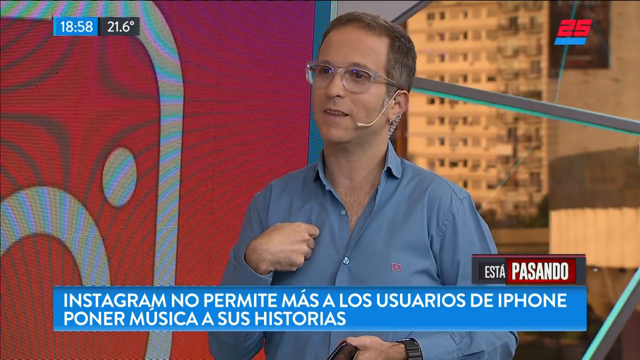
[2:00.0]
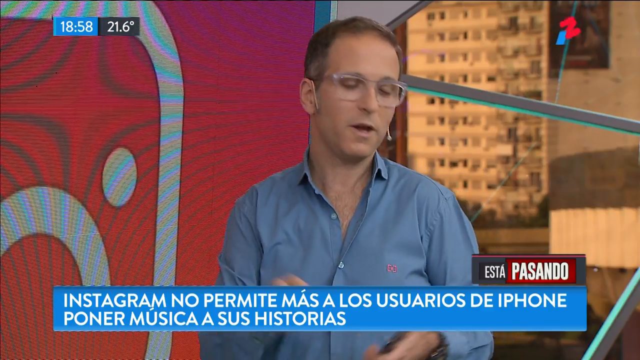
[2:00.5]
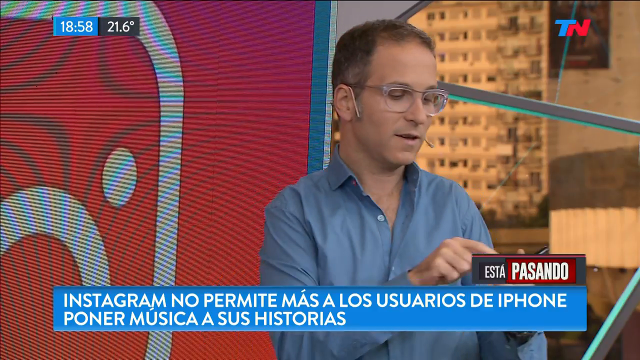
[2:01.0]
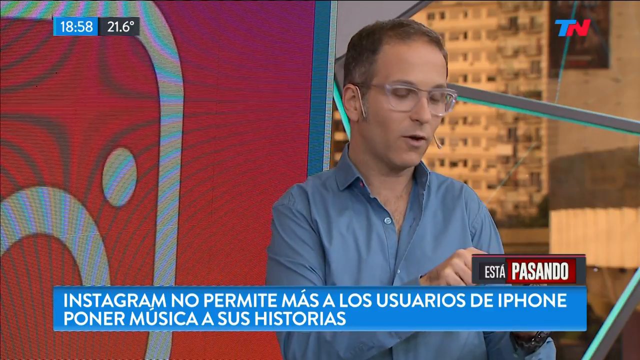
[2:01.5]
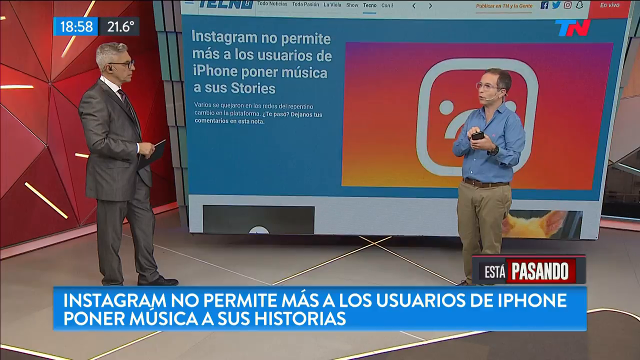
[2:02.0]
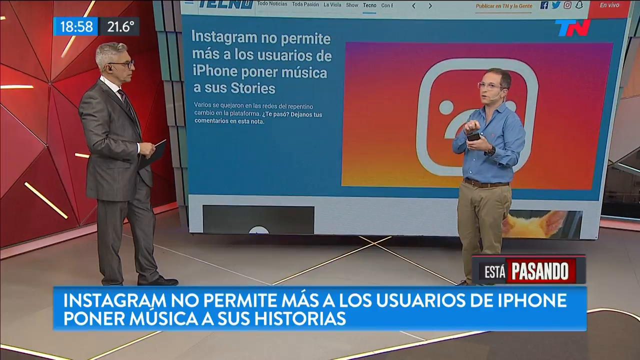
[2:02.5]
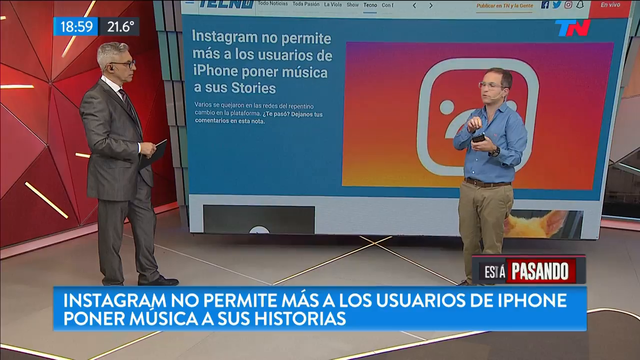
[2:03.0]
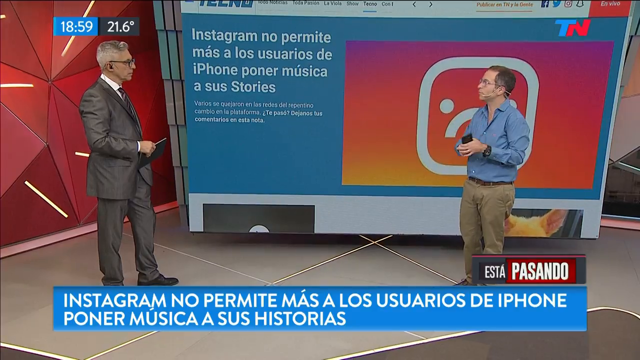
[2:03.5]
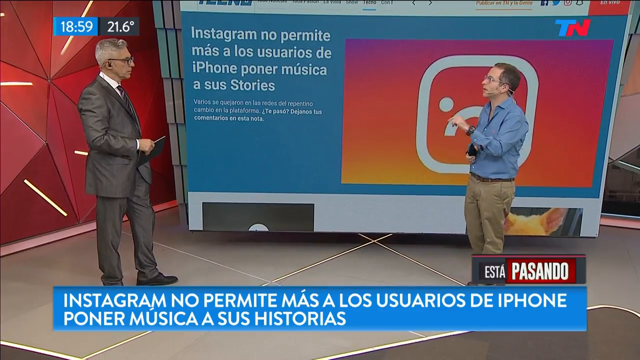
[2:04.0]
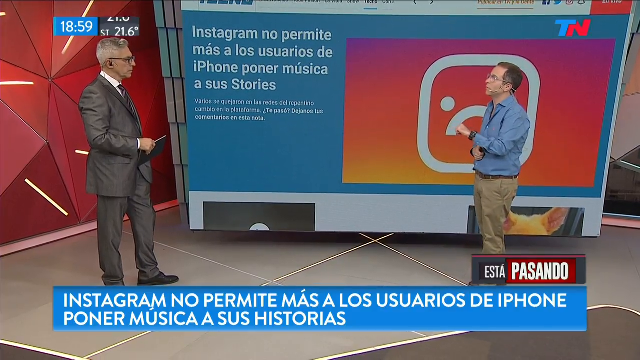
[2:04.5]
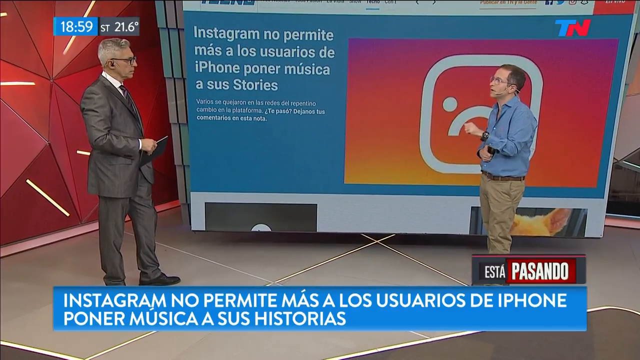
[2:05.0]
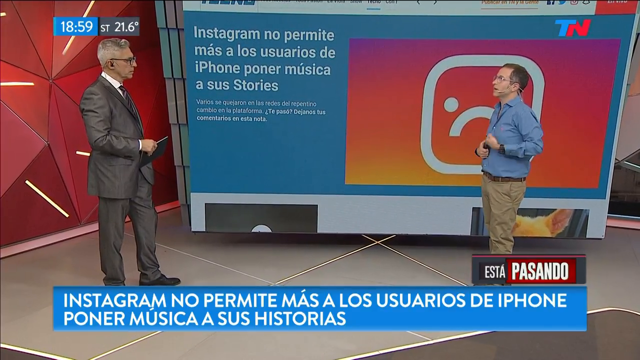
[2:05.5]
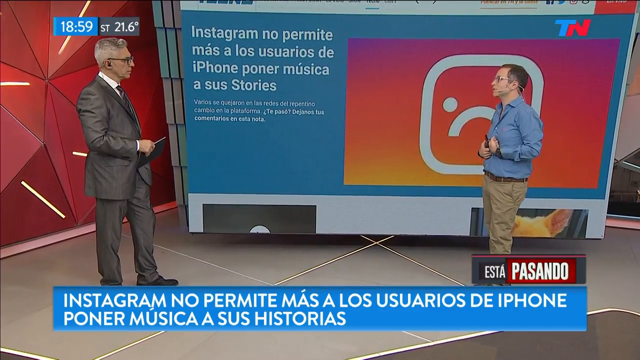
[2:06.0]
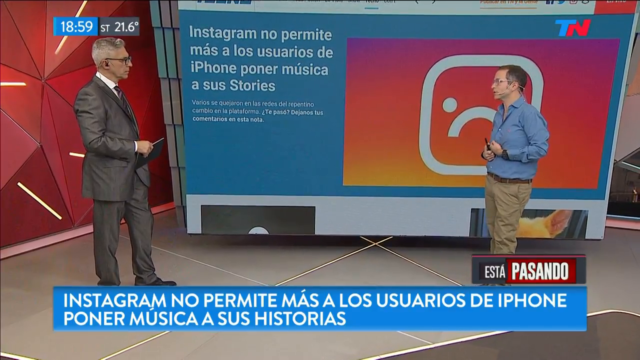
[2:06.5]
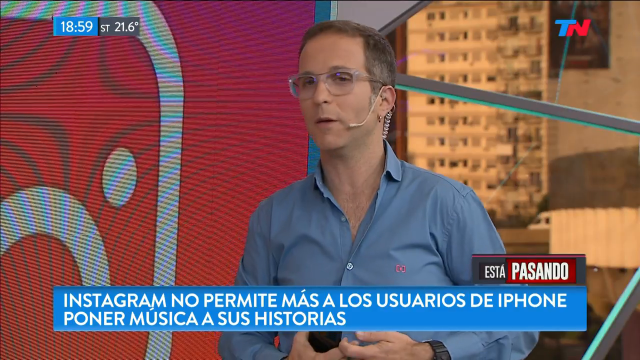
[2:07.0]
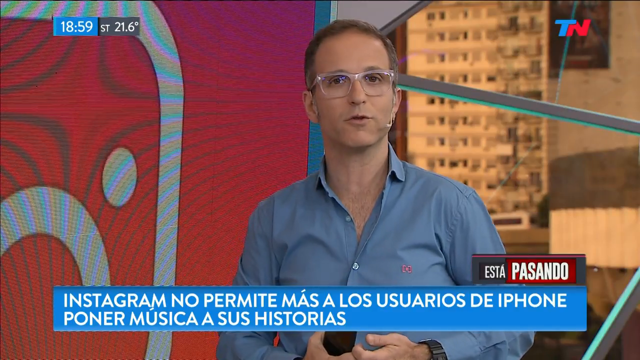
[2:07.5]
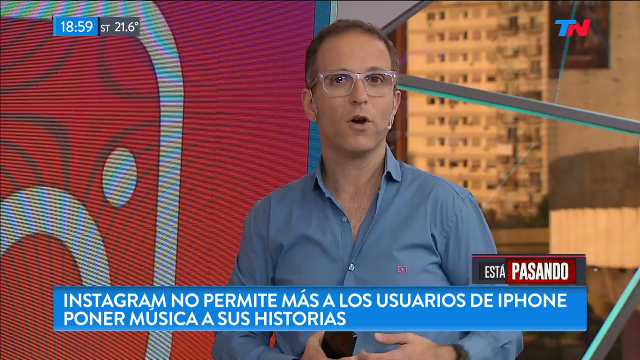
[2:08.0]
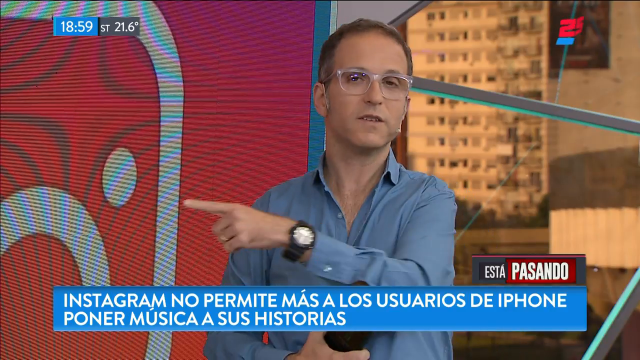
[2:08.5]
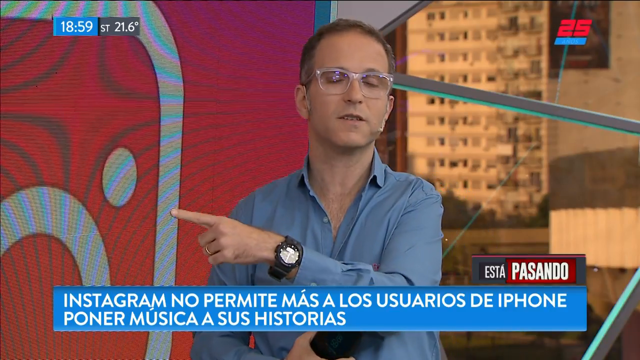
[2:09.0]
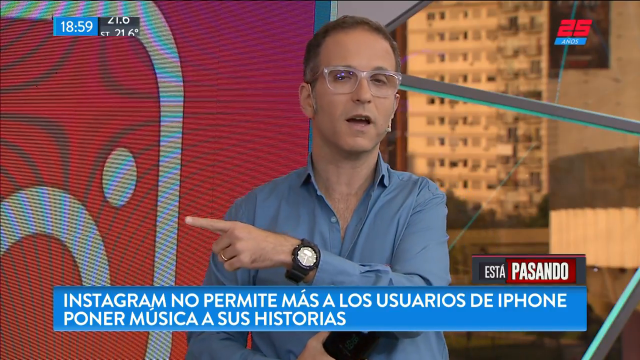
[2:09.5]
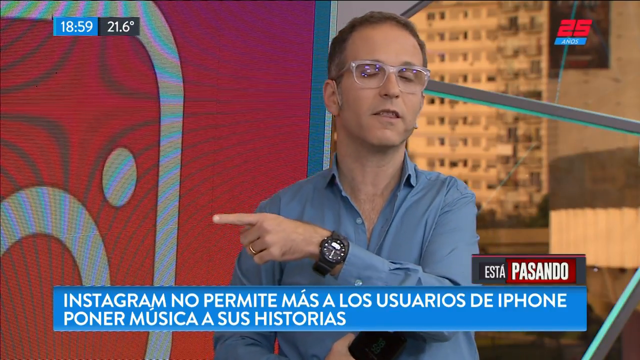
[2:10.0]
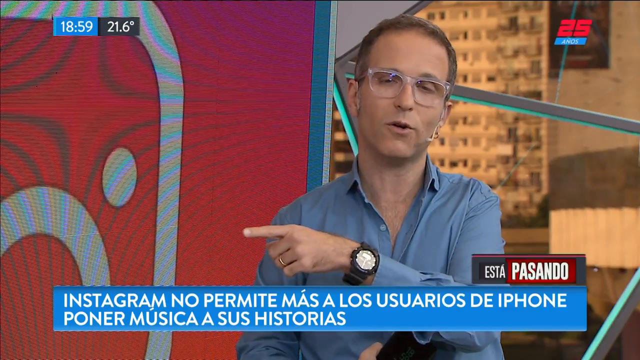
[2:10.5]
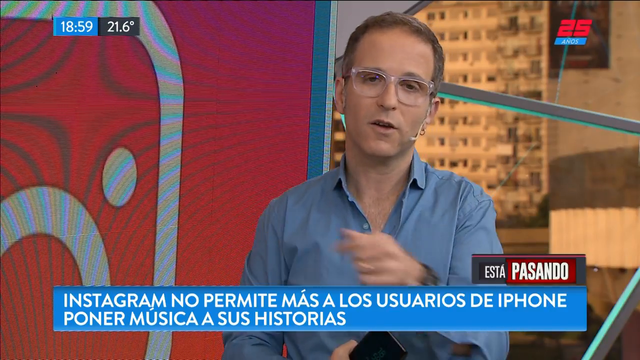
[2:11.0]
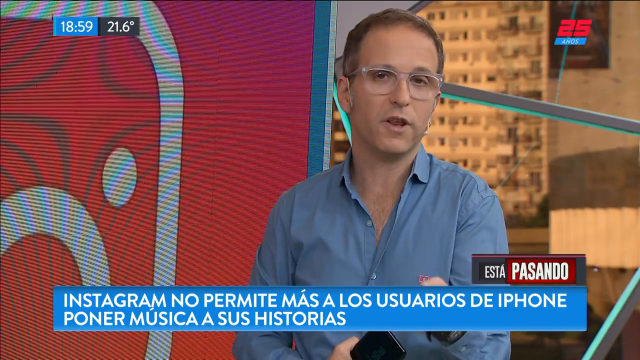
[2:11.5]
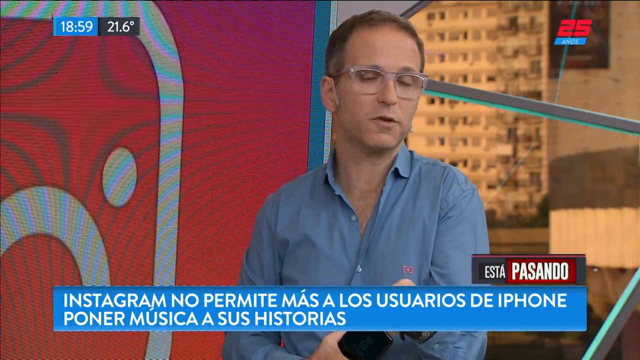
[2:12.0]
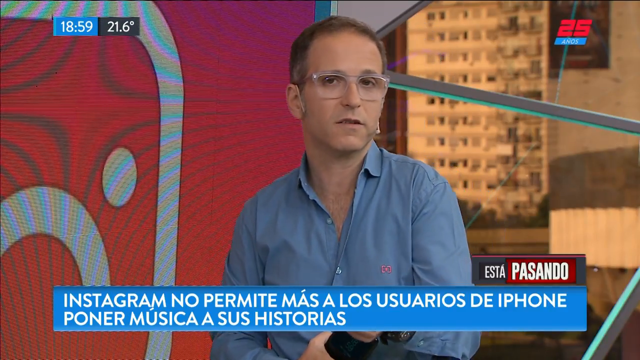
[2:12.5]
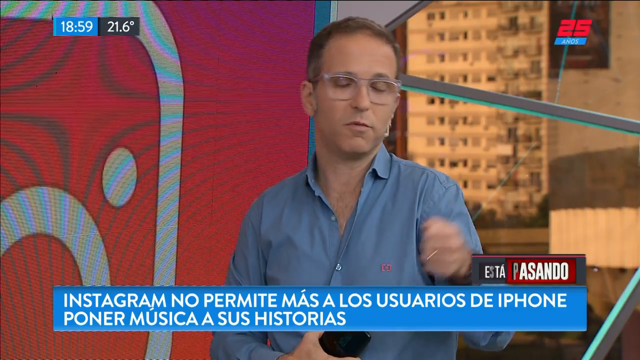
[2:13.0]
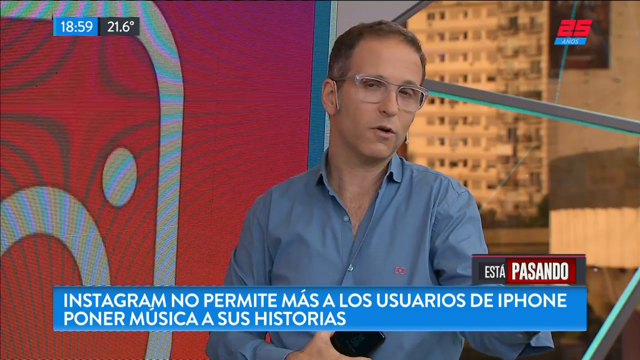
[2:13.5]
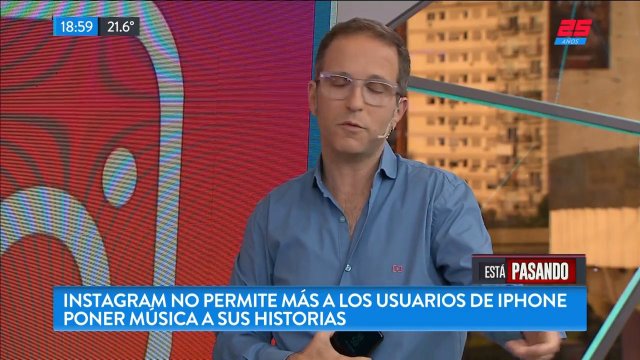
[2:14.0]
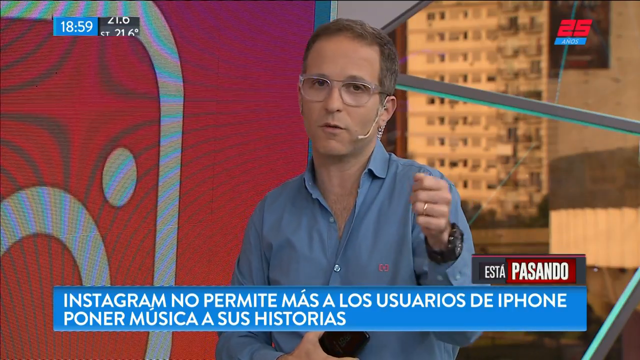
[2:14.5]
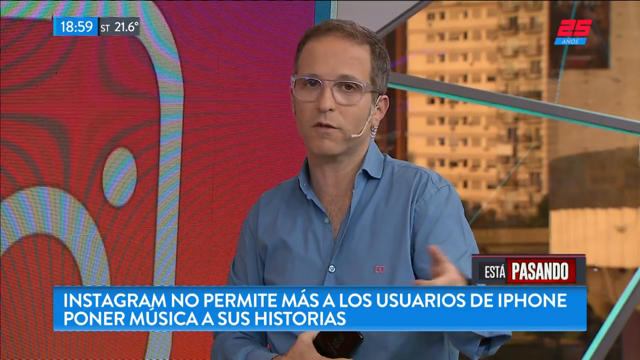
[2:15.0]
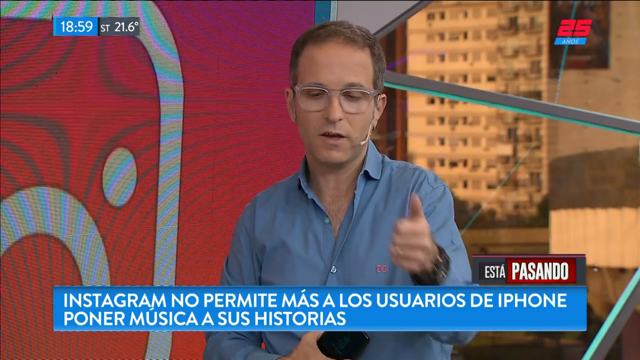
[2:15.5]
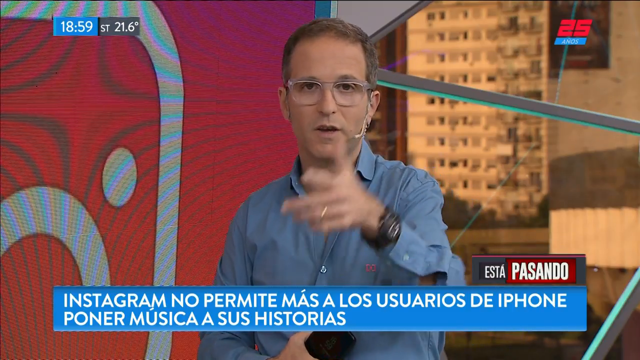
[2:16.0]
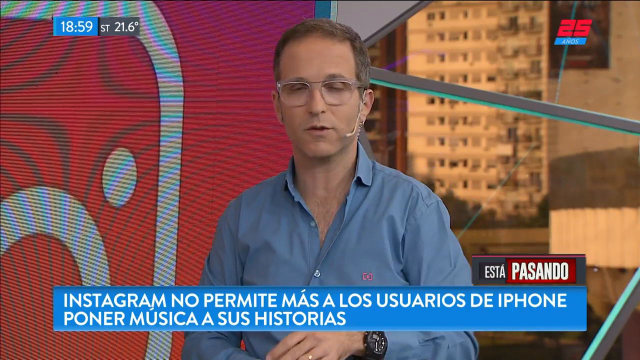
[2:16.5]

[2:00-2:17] The same man, in a button-down shirt and khaki pants, wearing a watch, glasses and a microphone and holding a phone, talks about the story of Instagram not letting iPhone users put music in their stories. All the words on the screen are in Spanish: "Instagram no permite más a los usuarios de iPhone poner músicas y historias". The upper right alternates between "TN" and "25". Outside, streets are visible, possibly in Nashville. Near the end the time changes to 1859. For a few seconds the camera zooms out again, showing the news host or anchor in his suit, who does not appear to be saying much; the one man does most of the talking.